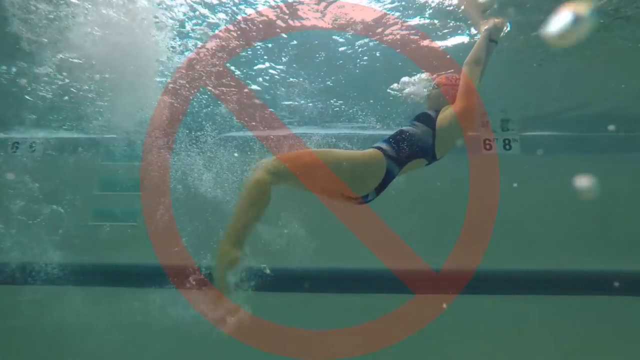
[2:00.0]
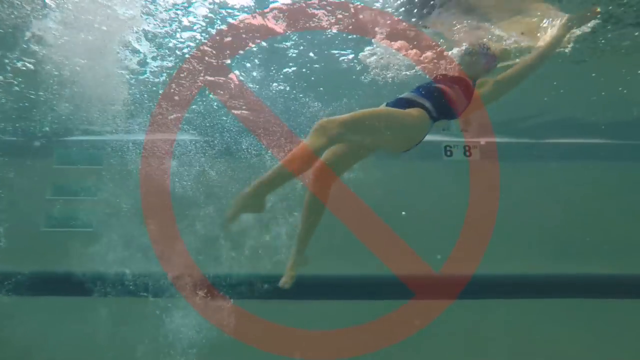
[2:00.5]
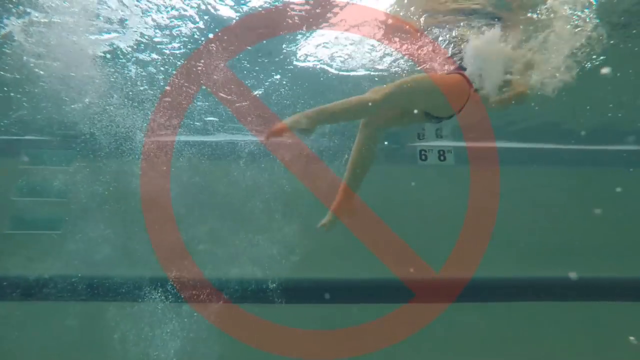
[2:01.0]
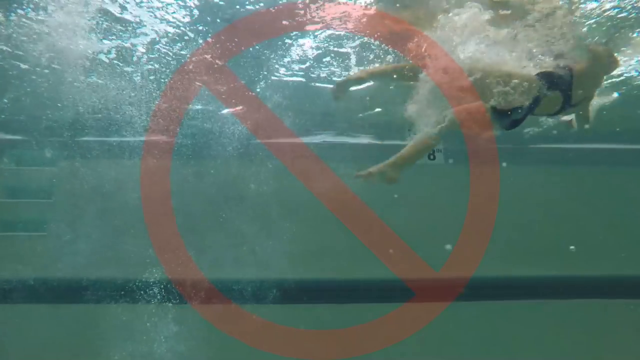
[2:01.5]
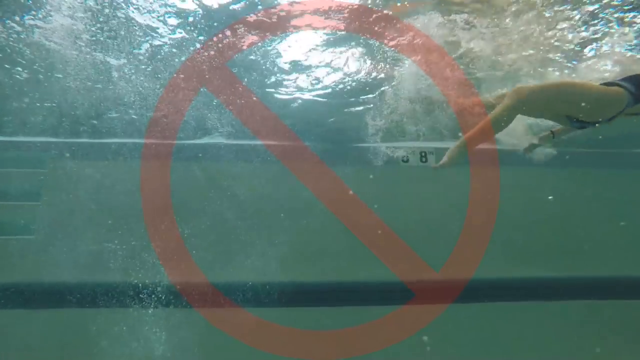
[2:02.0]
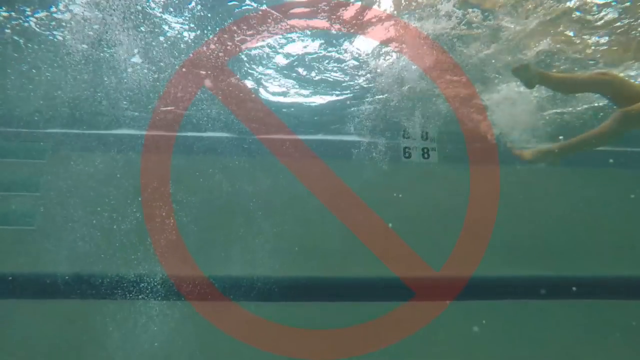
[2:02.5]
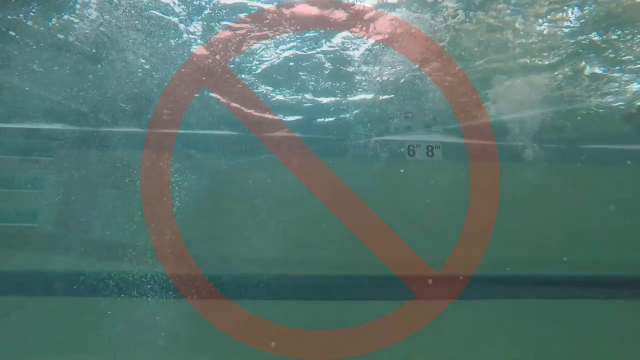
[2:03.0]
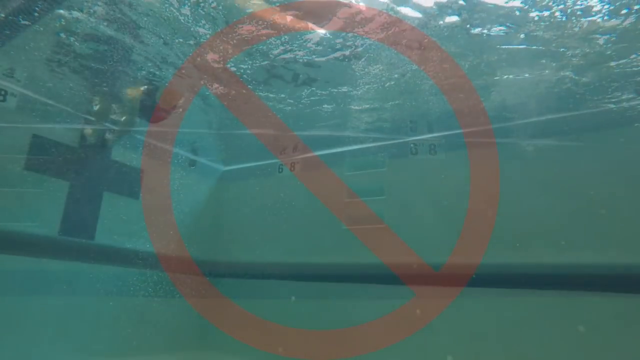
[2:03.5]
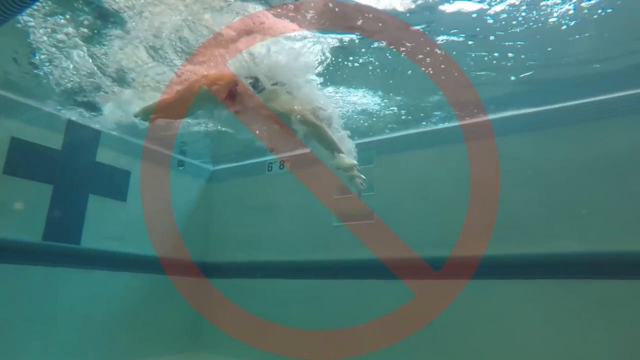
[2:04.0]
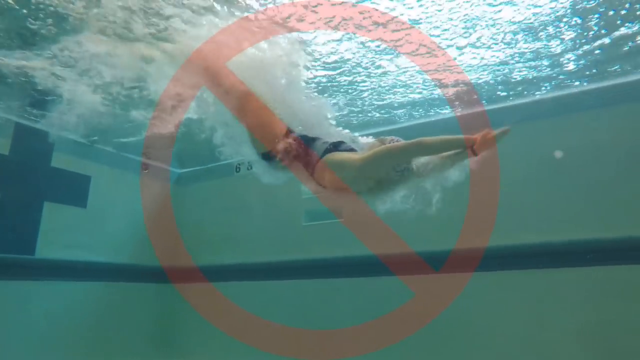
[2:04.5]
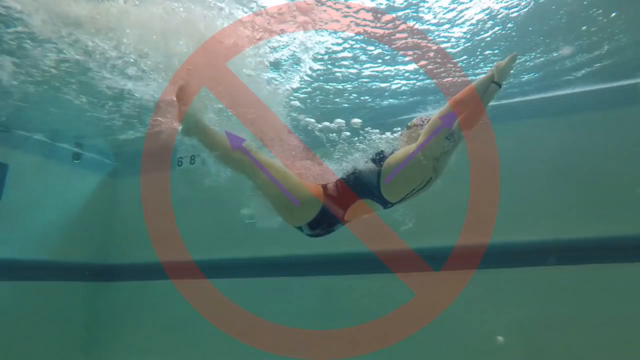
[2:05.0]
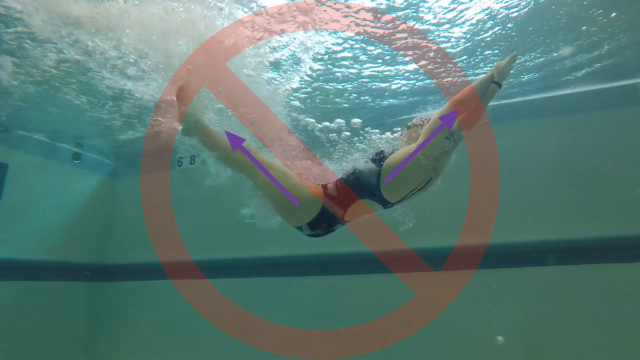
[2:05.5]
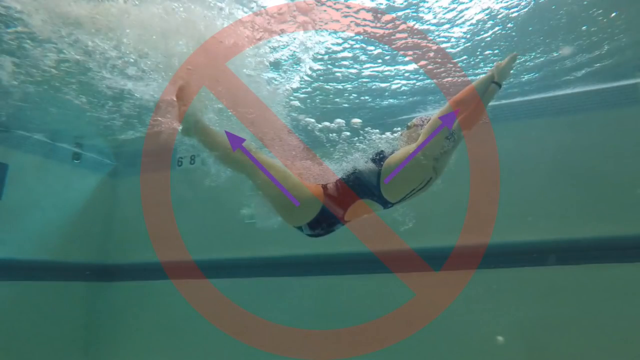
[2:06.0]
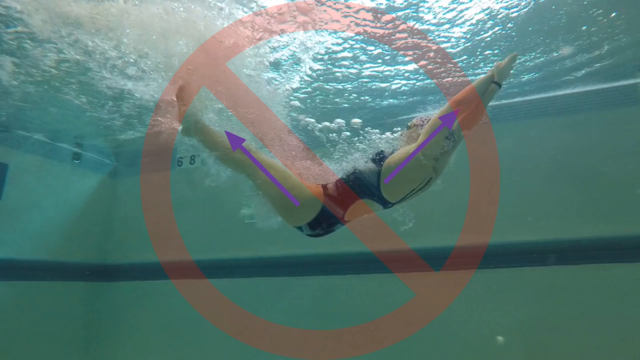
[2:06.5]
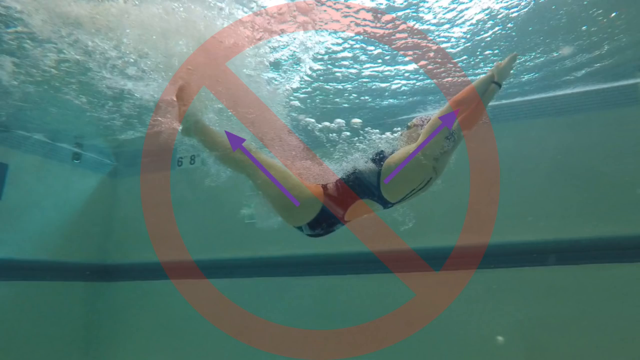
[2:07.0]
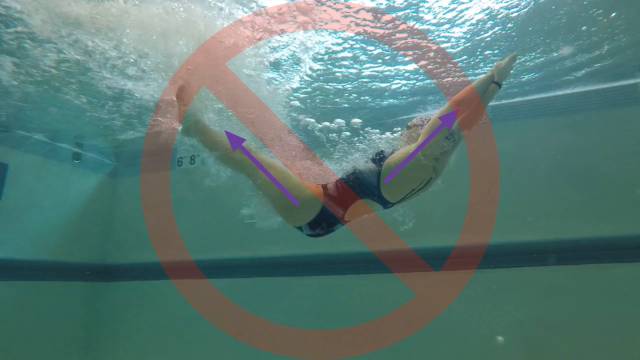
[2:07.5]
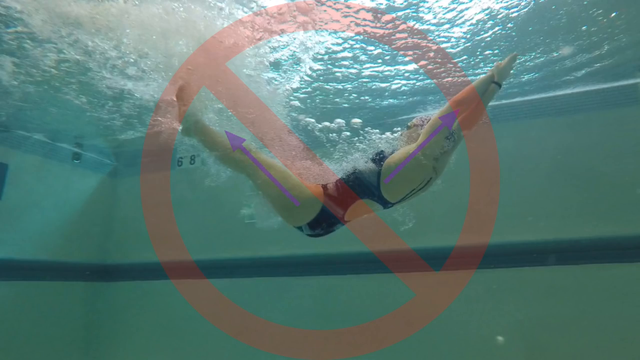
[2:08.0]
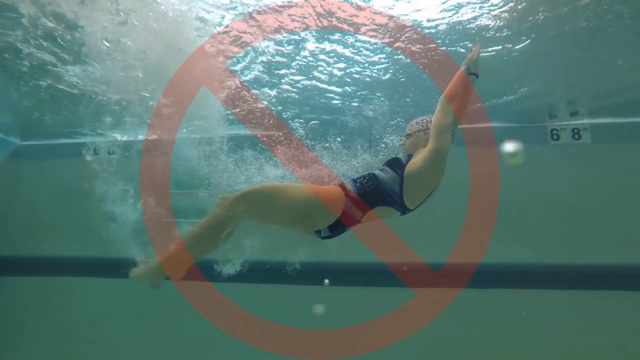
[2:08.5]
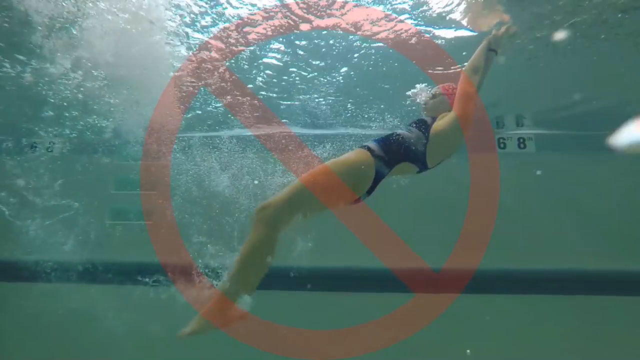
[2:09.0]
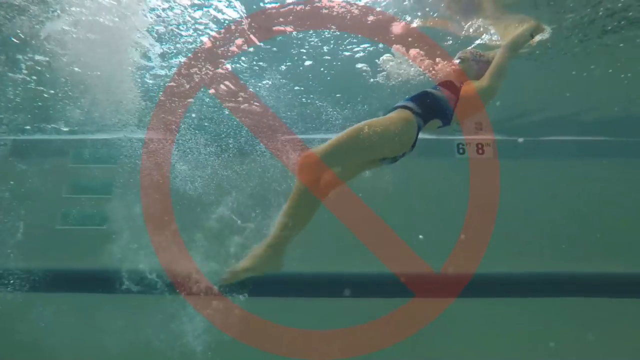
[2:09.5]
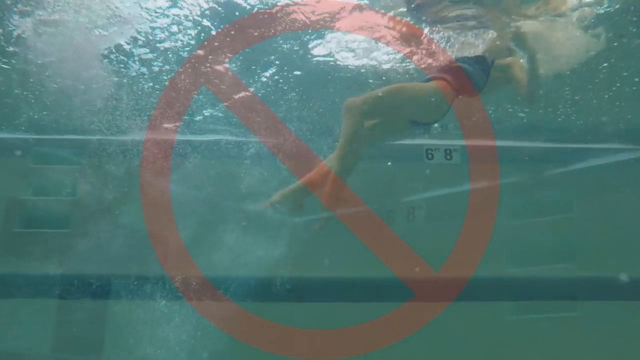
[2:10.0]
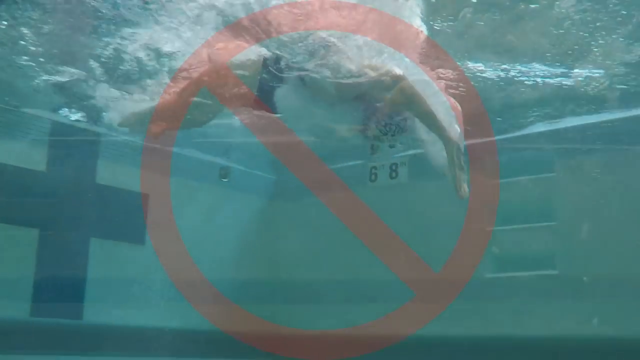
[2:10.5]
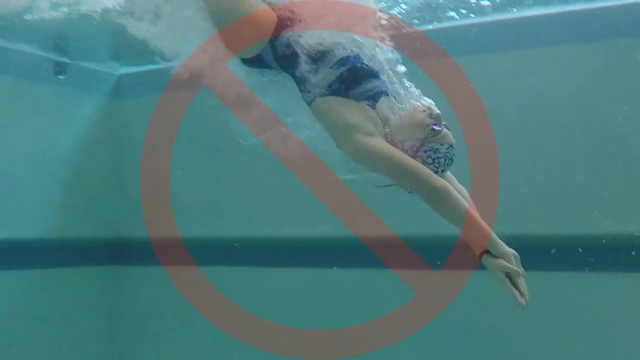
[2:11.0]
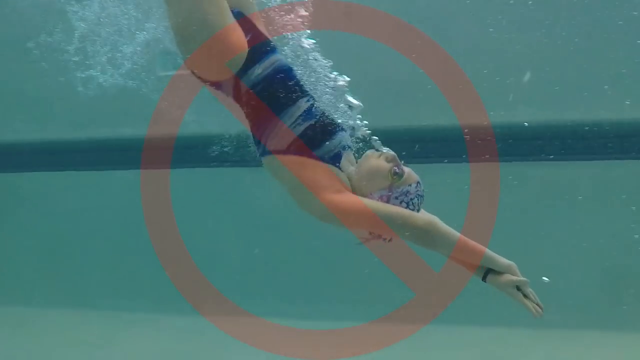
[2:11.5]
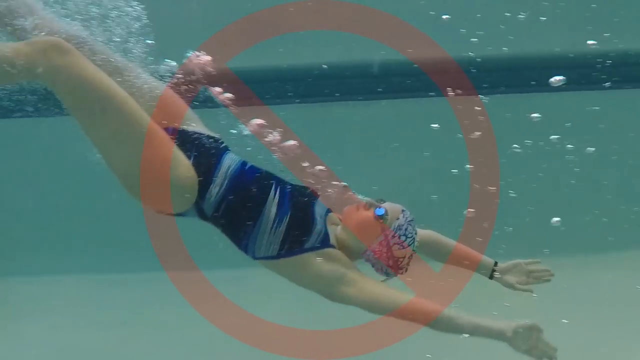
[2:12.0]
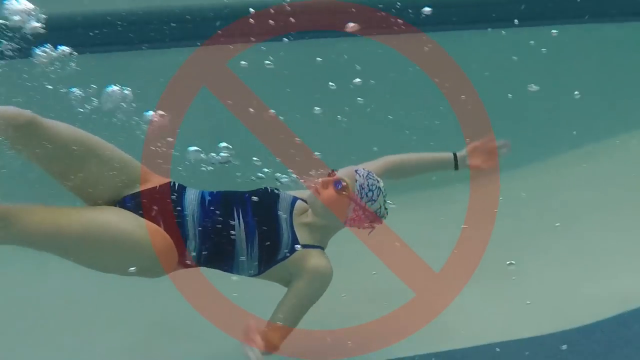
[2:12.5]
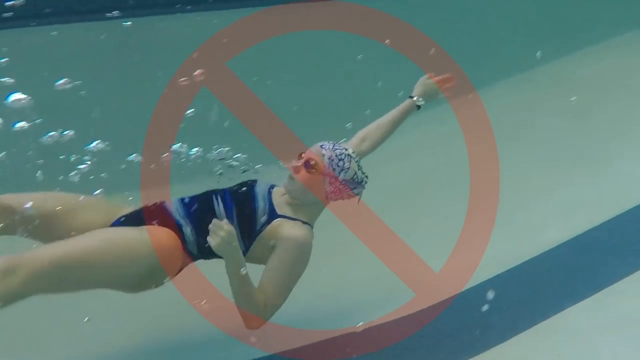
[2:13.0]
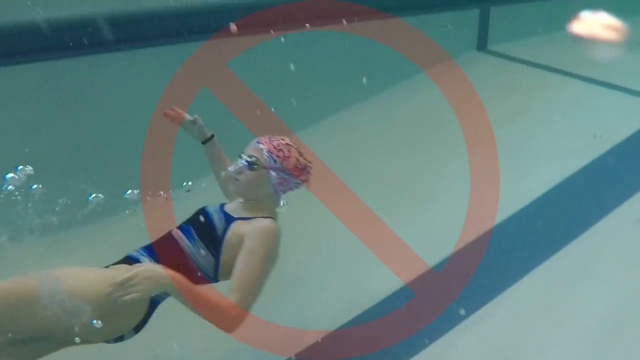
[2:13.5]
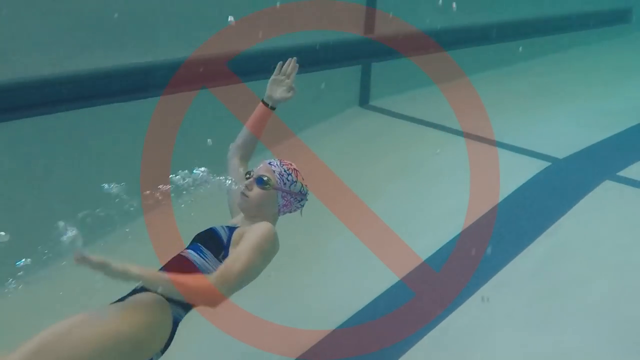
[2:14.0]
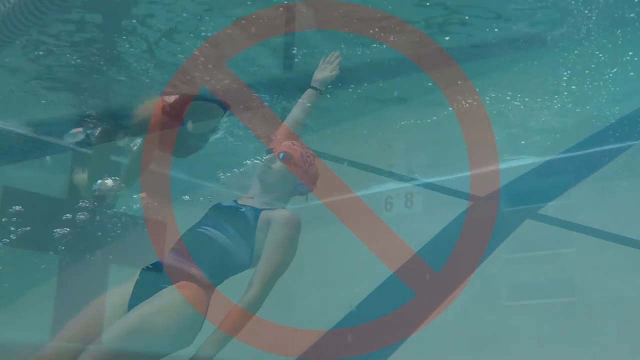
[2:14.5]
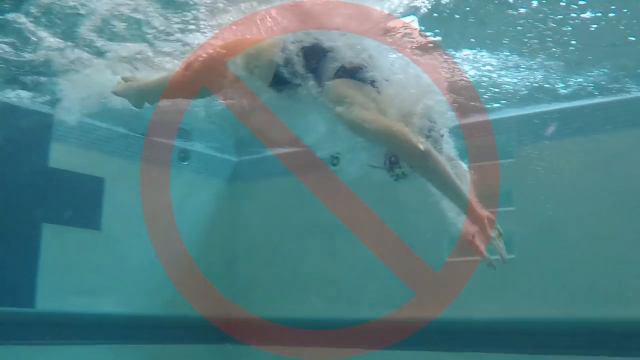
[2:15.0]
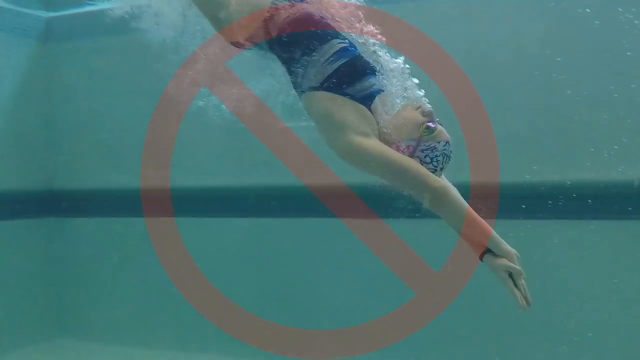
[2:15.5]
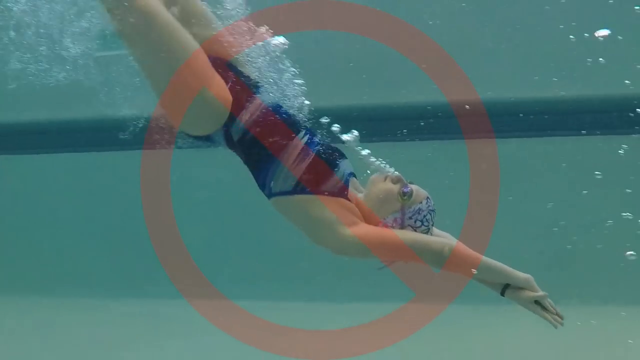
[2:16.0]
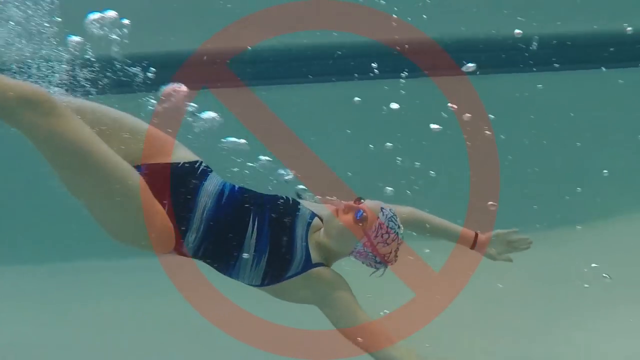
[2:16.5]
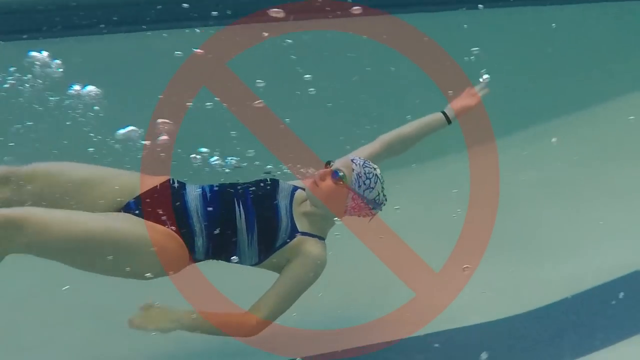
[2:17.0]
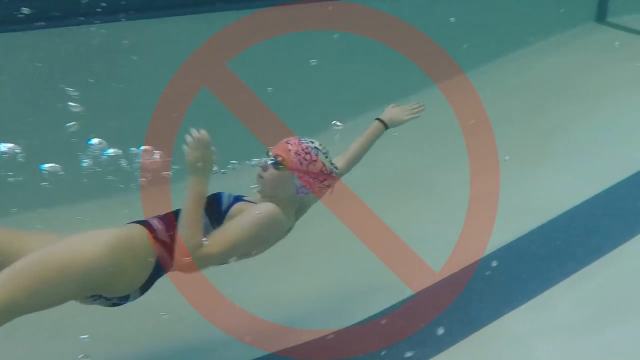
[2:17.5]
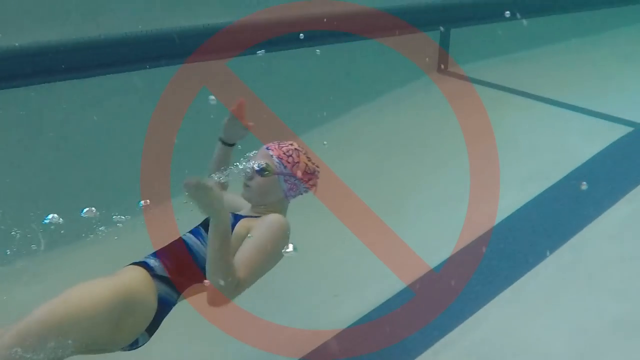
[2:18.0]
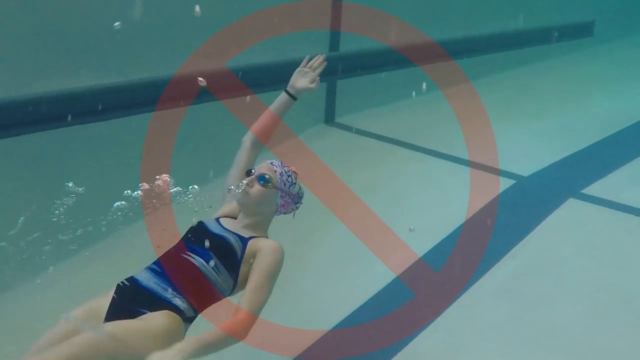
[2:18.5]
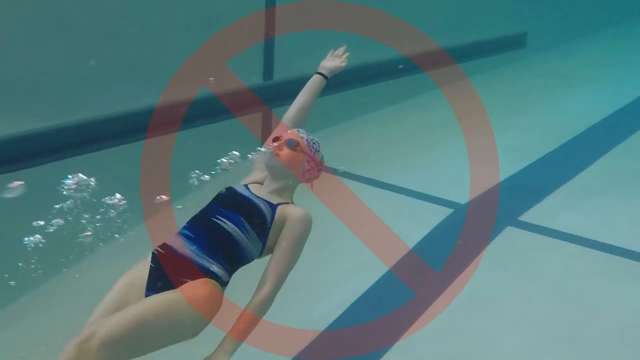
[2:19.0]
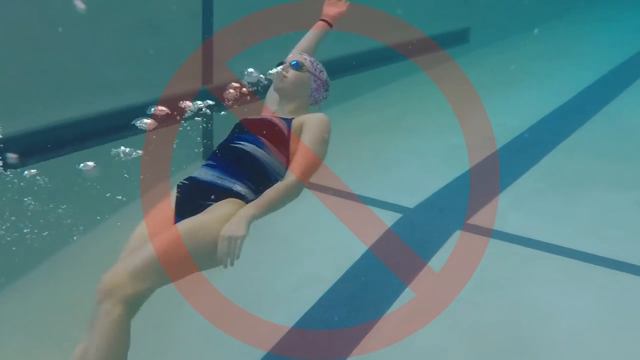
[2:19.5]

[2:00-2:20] Back in the water, the video shows form the swimmer should not use. First, the swimmer is already in the water with her body in more of a V shape, and a big red circle with a line through it indicates incorrect form. The video cuts to the swimmer projecting herself backward with her body again in too much of a V shape, her legs almost in a pike position, as she propels herself backward into the pool and upward toward the surface. Another incorrect example follows: her body is straight like a pencil as she dives in, but she stays pointed straight and goes much deeper into the pool than she should, without curving upward toward the surface. In the next incorrect example she enters the water and dives pencil-like deep toward the bottom of the pool, almost touching the floor. As she reaches the floor she drops her left arm from above her head to her side and begins a side stroke with one arm, her left arm down by her side and her right arm outstretched above her head.